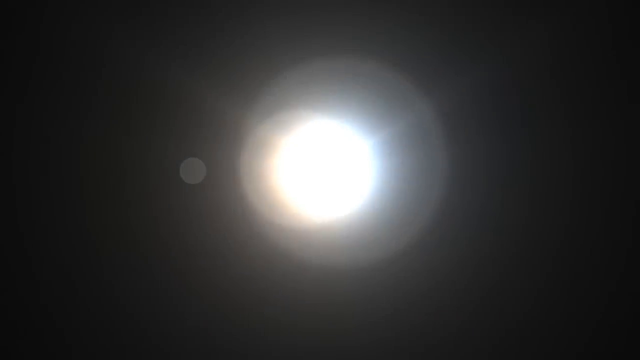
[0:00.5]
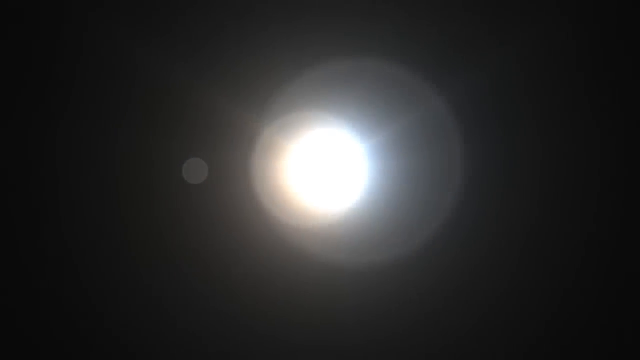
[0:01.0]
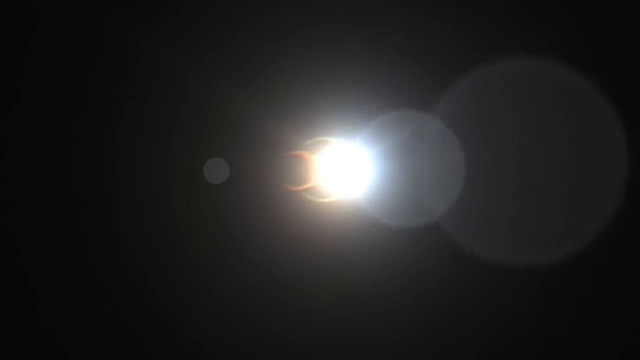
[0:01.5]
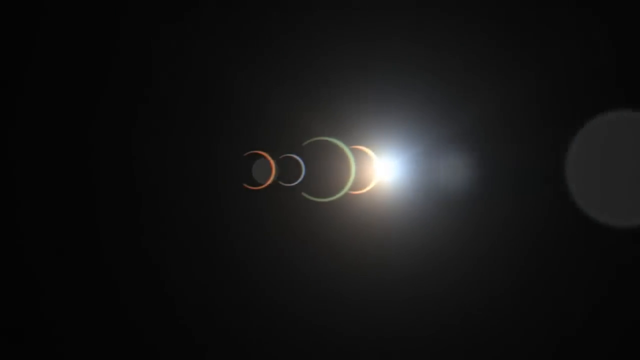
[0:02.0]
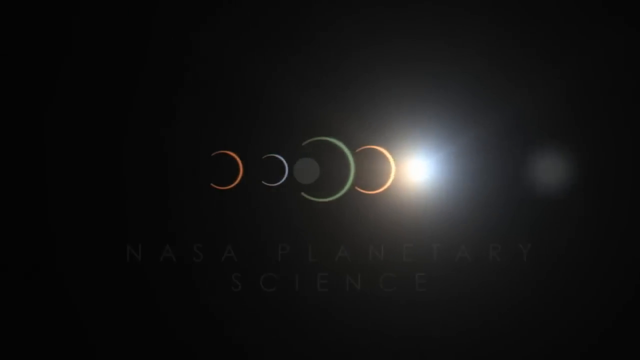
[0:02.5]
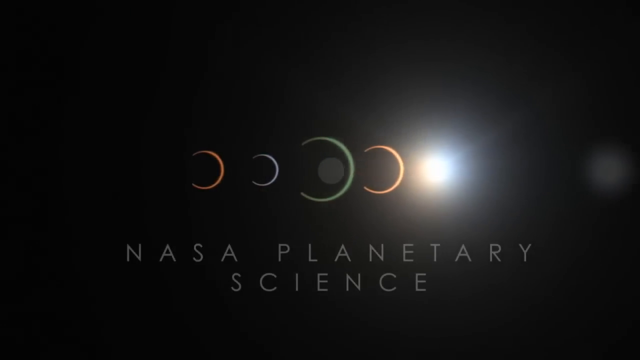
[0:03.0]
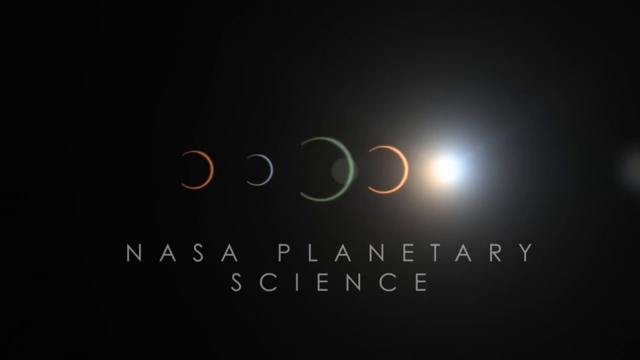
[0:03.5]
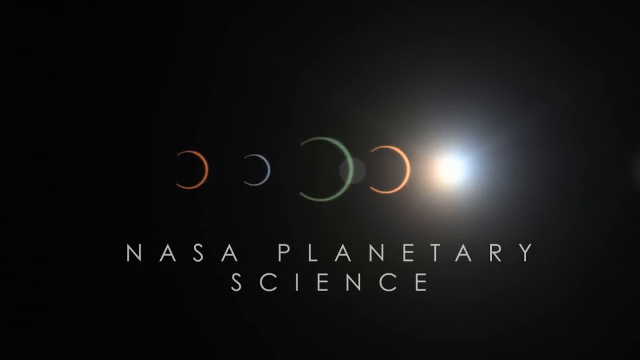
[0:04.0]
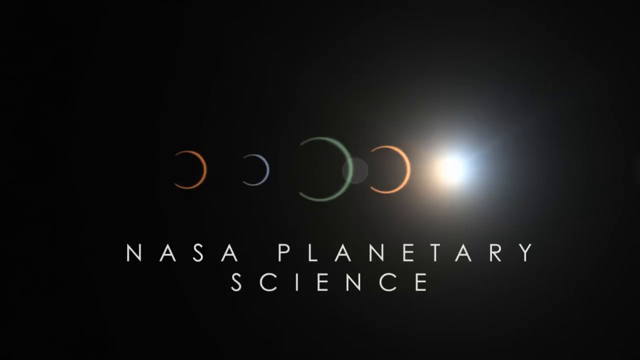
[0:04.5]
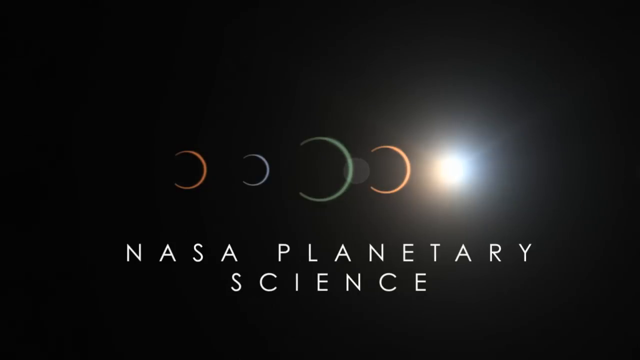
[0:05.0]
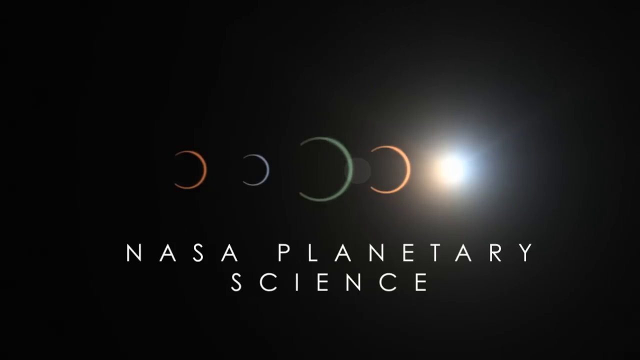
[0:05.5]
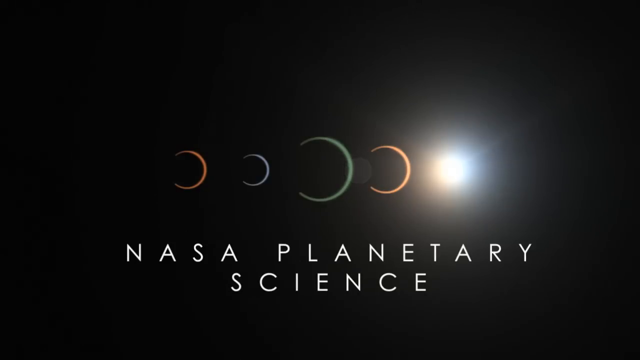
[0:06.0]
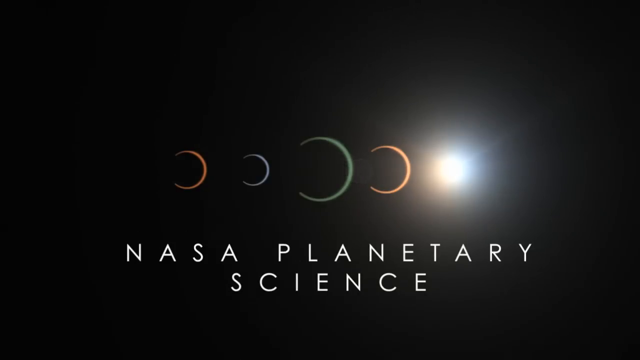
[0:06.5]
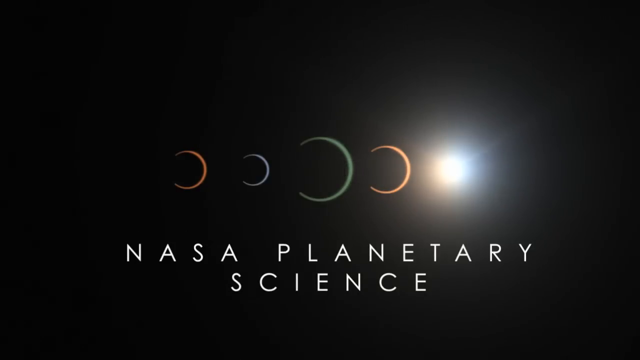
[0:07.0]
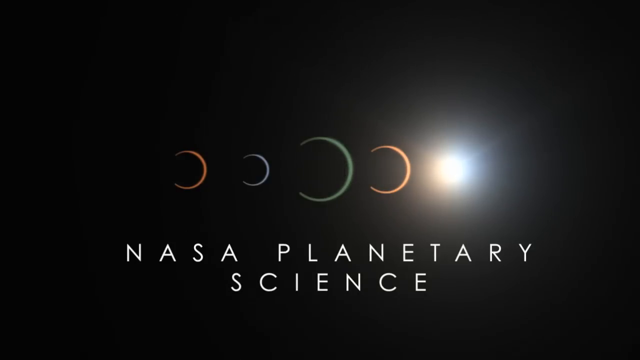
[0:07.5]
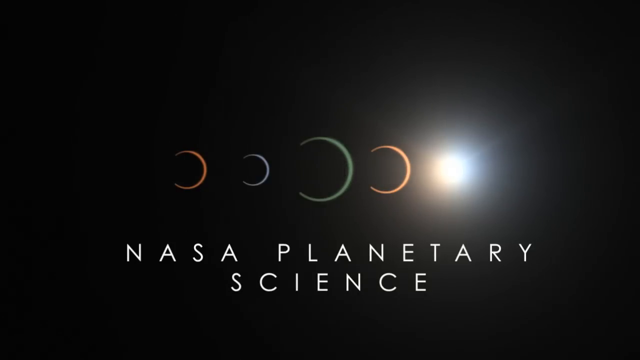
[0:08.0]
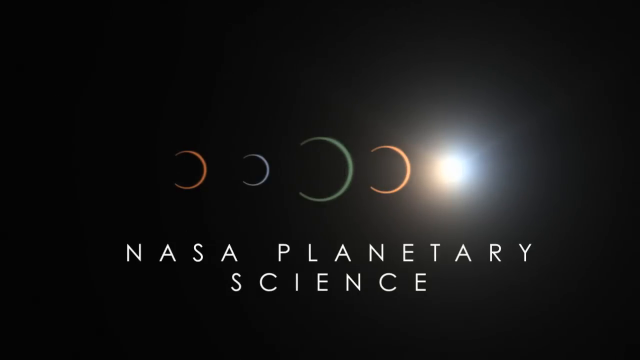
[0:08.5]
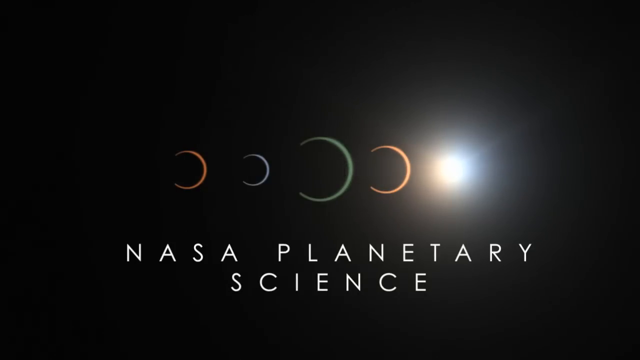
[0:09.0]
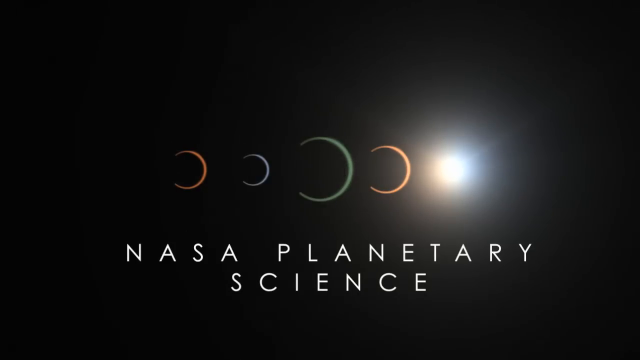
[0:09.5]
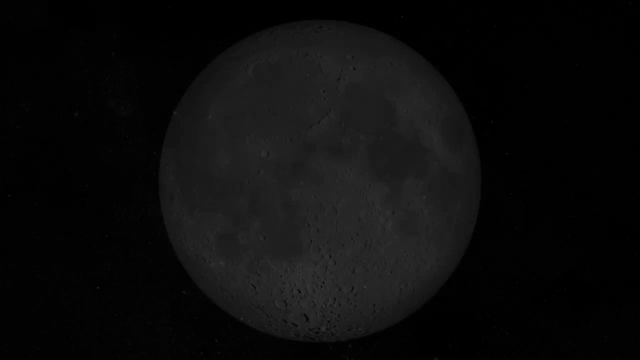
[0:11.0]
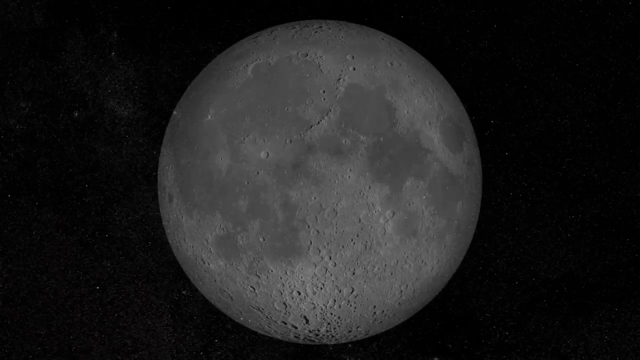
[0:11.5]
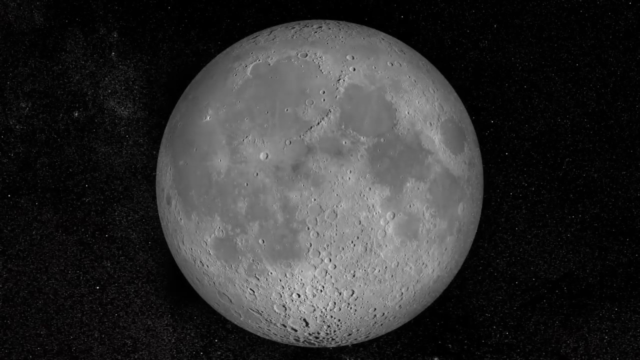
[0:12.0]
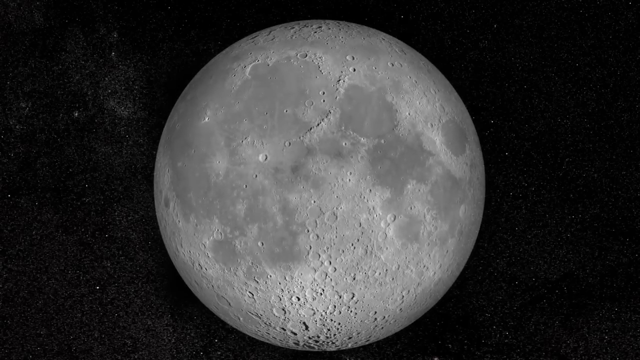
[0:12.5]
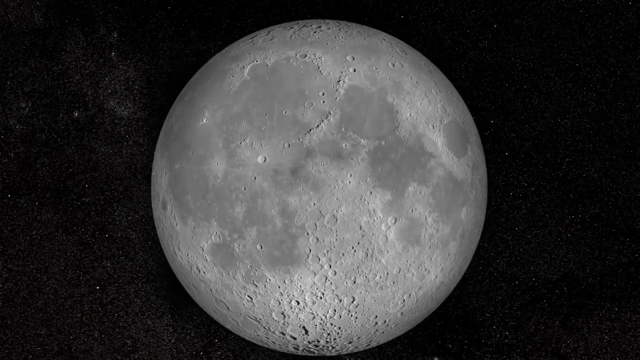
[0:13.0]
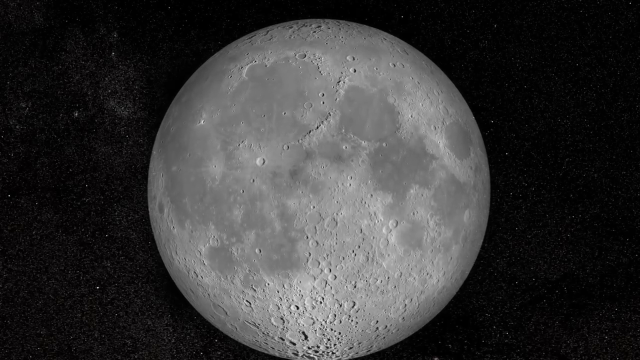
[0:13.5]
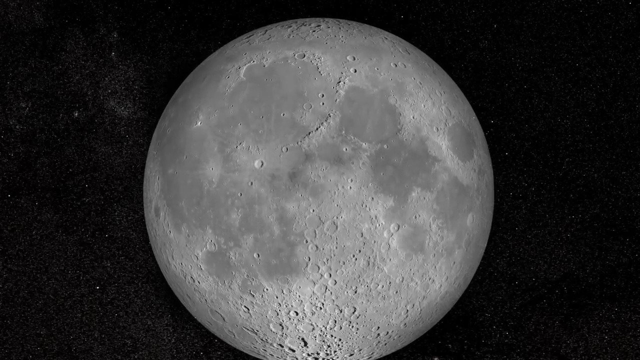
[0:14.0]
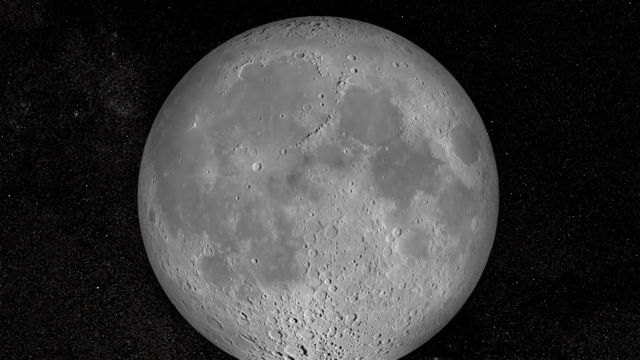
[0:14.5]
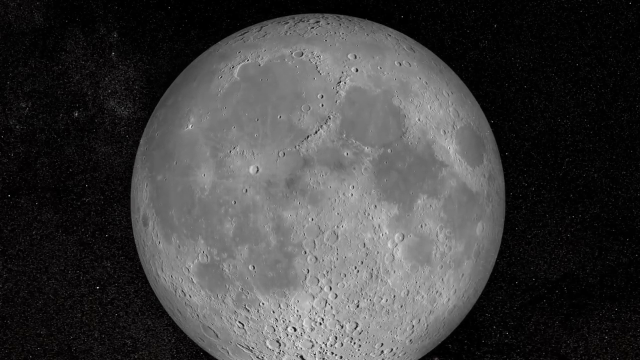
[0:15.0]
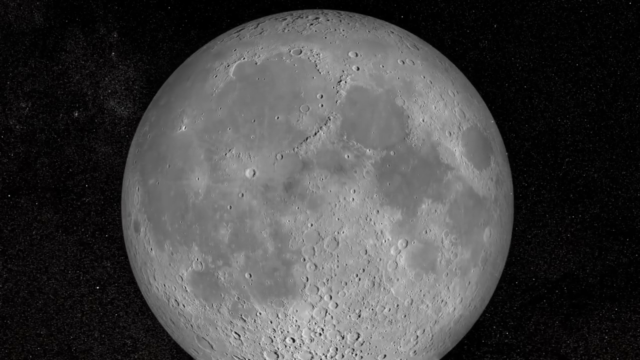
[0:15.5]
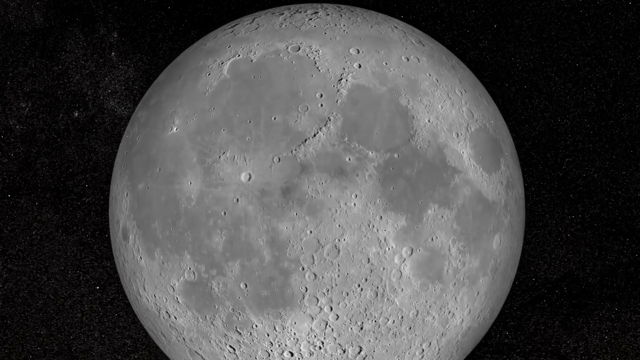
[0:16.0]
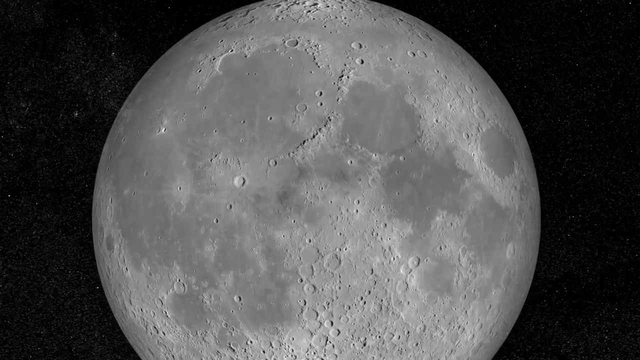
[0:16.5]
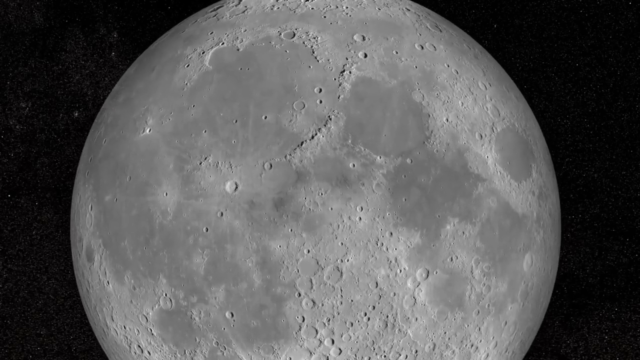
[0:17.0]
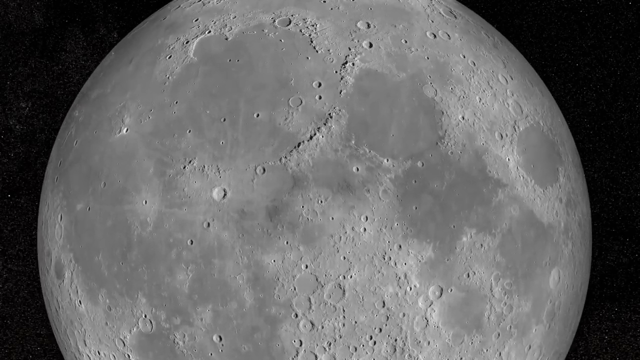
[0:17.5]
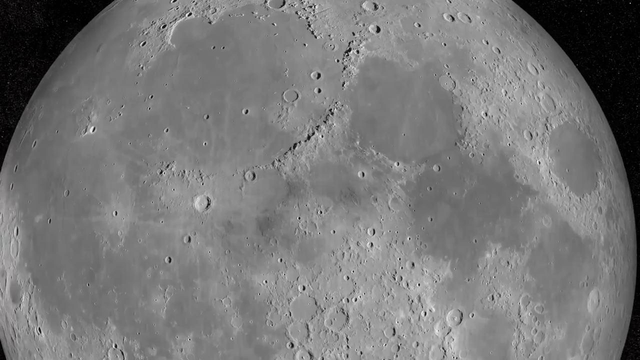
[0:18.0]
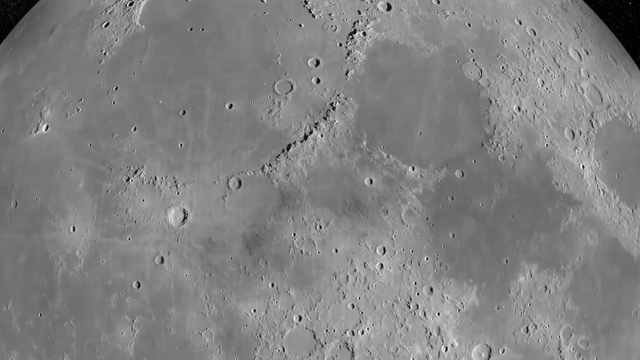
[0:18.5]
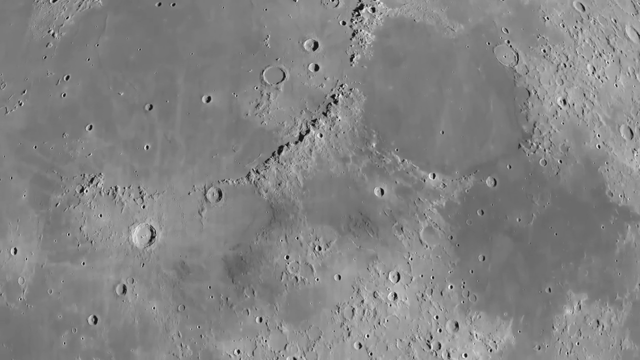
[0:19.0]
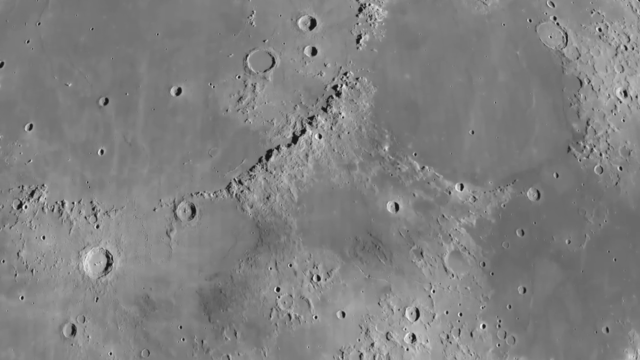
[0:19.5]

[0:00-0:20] A ball of light turns into a logo of four crescent moons facing to the left, with text underneath reading "NASA Planetary Science." The logo is on a solid black background with some lighter portions, and the ball of light is still visible to the right of the logo. A transition leads to a close-up animated view of Earth's moon with the galaxy and stars behind it. The moon's surface is seen from a faraway distance, with craters and flat portions throughout. Only one side of the moon is visible. The camera pans closer and closer until the smaller craters become larger, revealing ridge lines, mountainous portions and completely flat portions of the surface. The surface is a mixture of gray and white.